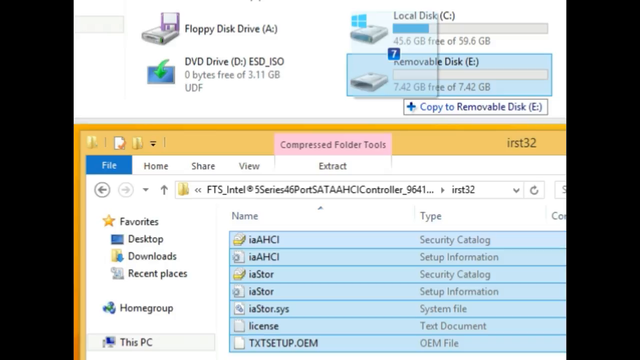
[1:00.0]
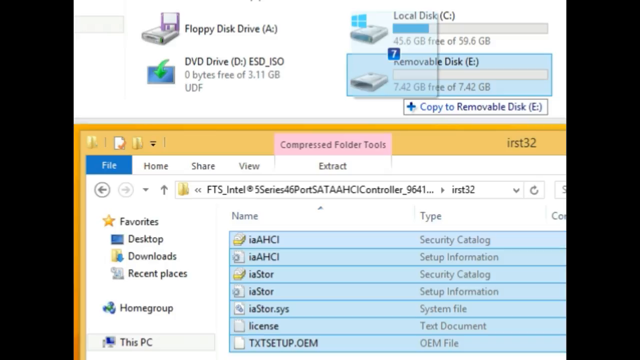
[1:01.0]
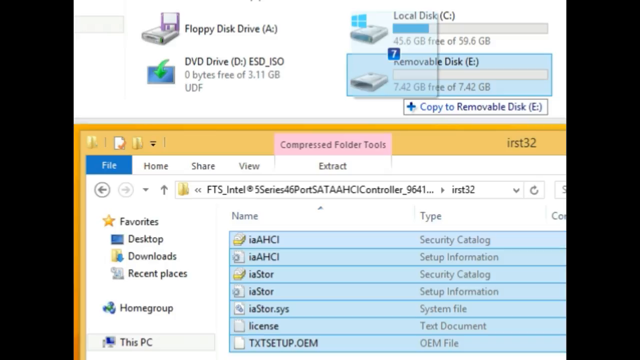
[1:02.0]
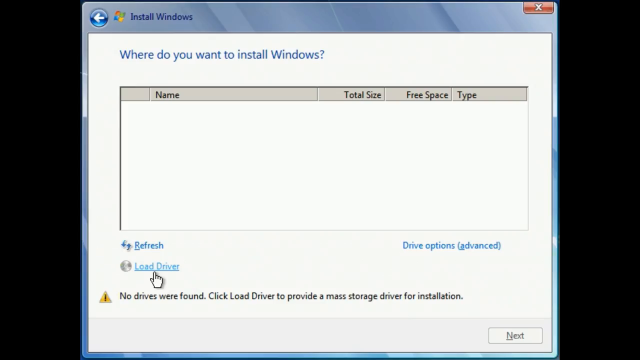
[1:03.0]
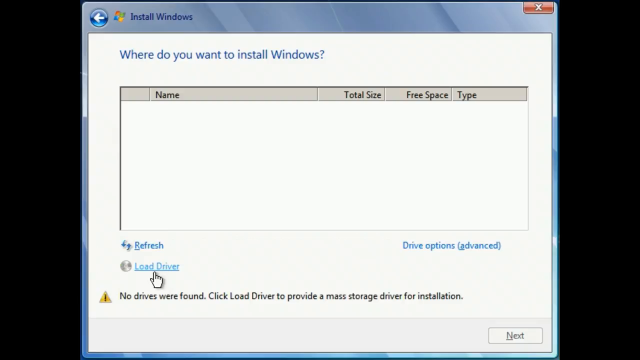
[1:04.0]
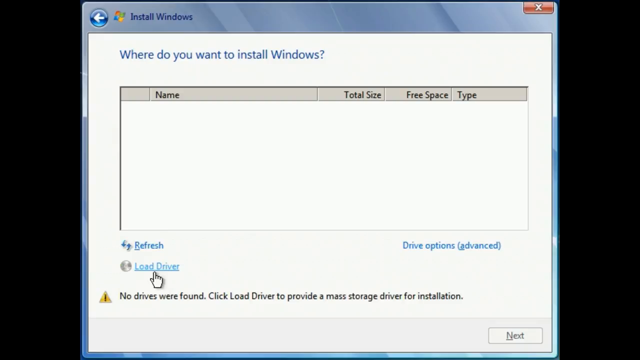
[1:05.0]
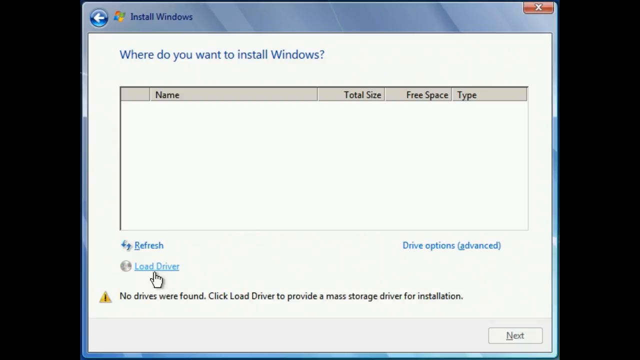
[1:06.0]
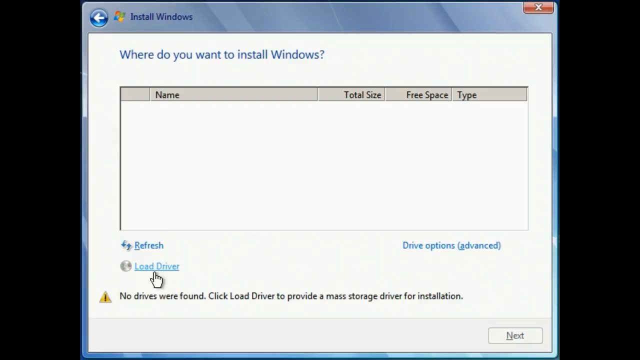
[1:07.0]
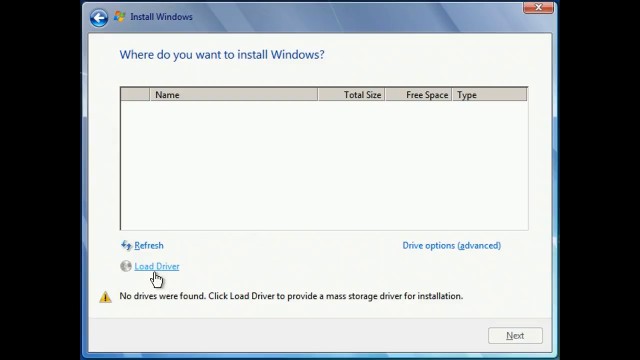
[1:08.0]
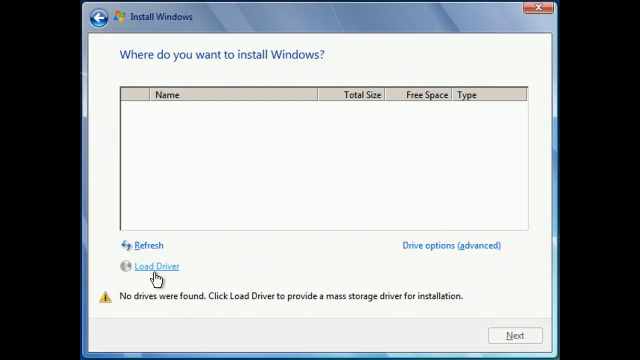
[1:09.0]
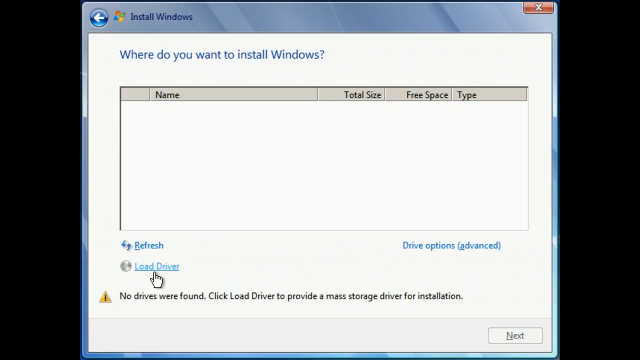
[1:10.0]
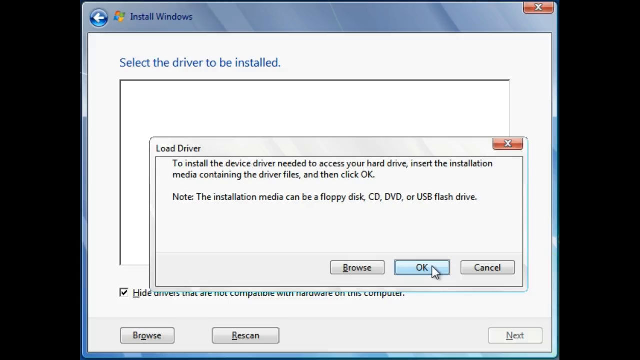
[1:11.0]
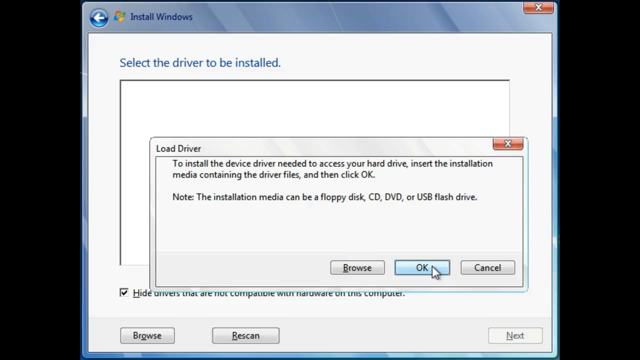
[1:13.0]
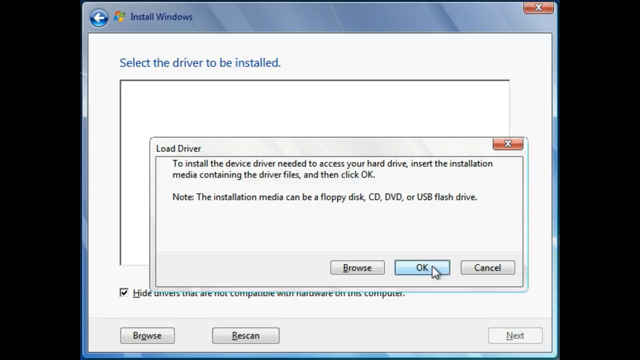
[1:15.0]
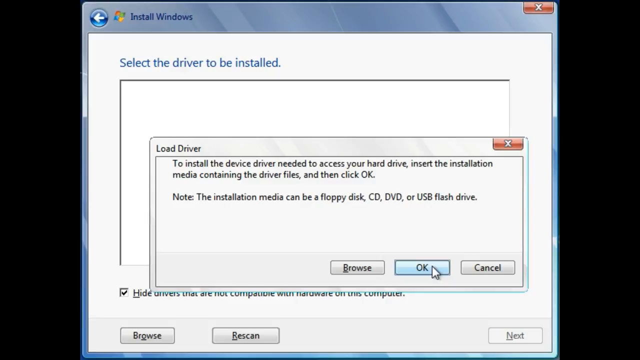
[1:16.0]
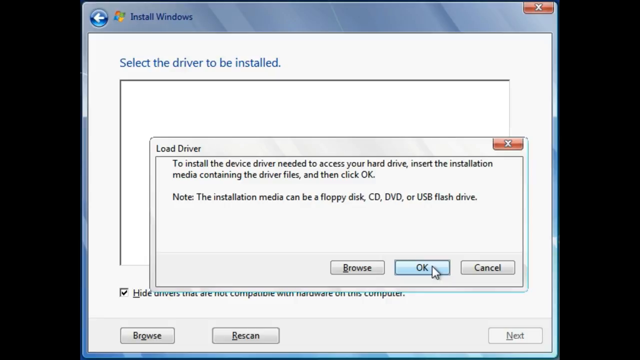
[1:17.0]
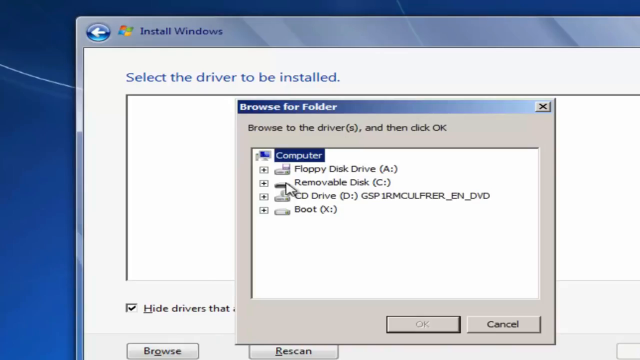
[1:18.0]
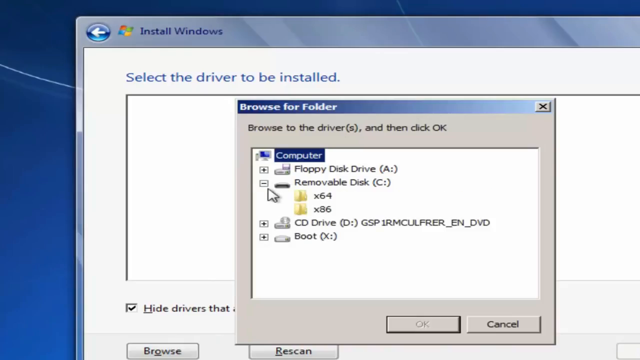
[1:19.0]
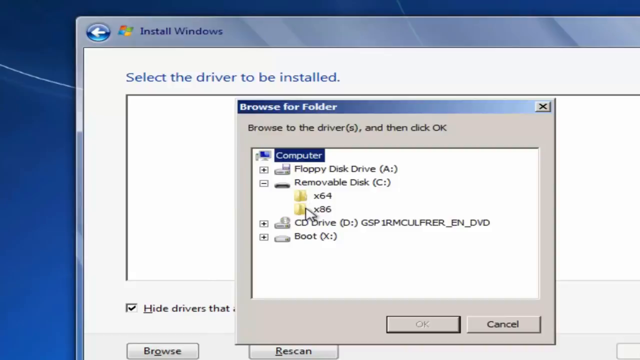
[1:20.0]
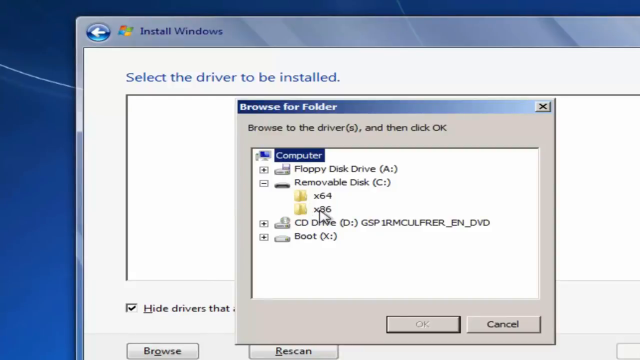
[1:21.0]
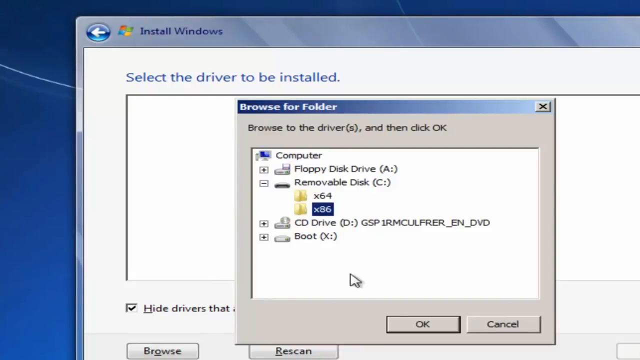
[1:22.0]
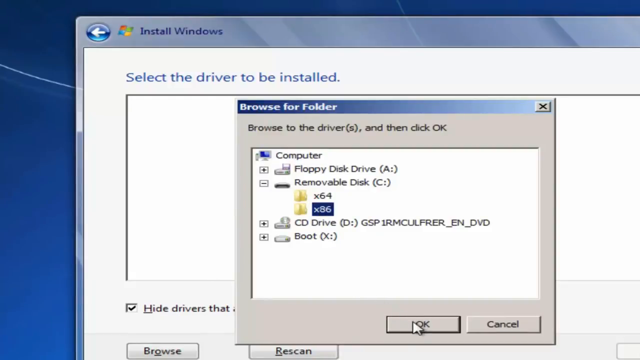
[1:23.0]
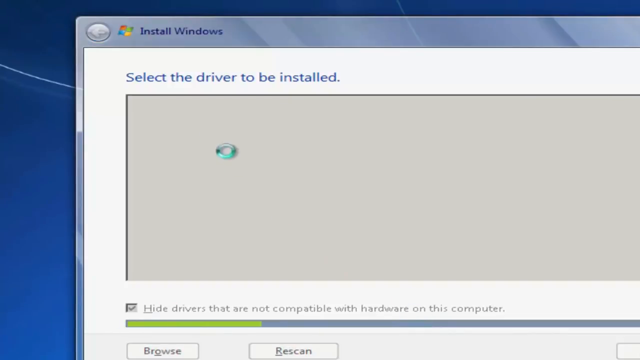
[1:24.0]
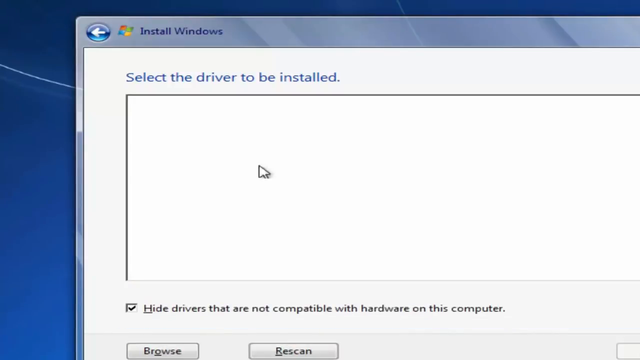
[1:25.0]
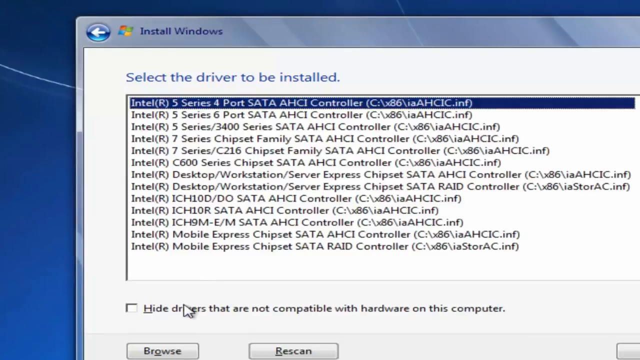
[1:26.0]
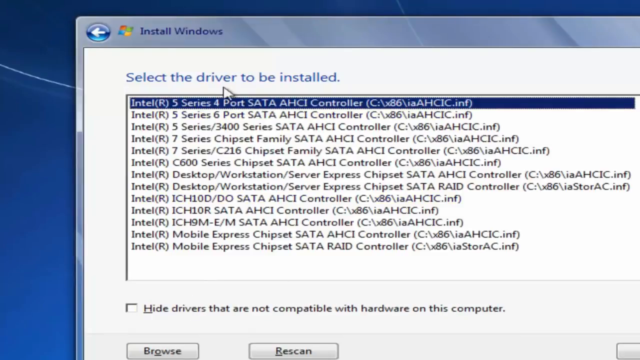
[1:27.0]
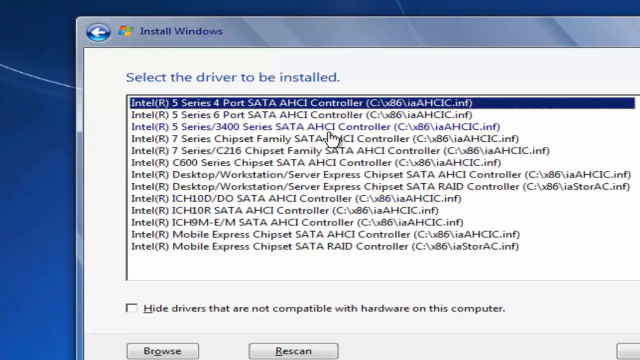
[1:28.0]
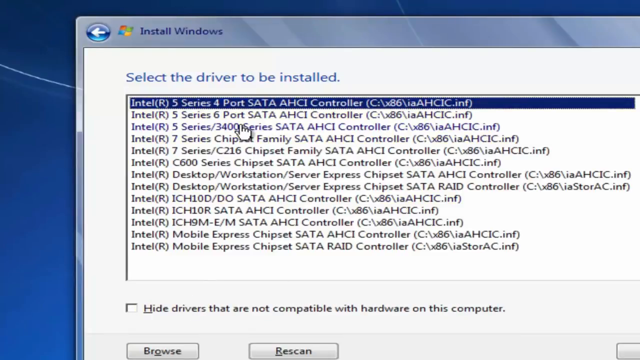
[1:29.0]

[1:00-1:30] An image made of two separate screenshots, cropped and placed one on top of the other, is shown. The top screenshot shows the local drives of a computer: the A drive, the C drive, the D drive and the E drive. Below it is a screenshot of a file folder showing the files within it, which are highlighted with a blue background. The screen then transitions to another screenshot, an install Windows prompt with the question "where do you want to install Windows?" at the top. A different screenshot then loads showing a pop-up for loading a driver, with three buttons: browse, okay and cancel; the cursor is hovering over the okay button, giving it a blue background. The screen then changes to another screenshot that appears to be some kind of video, as the cursor is moving. It shows the Windows install window with another pop-up window overlaid, asking the user to browse for a folder. The user looks at the folder list and clicks the expand button next to the C drive, which loads two folders below with different Windows versions, x64 and x86. They double-click on x86 and click OK, and files start to load from the drive. The cursor moves left and right over each folder line.